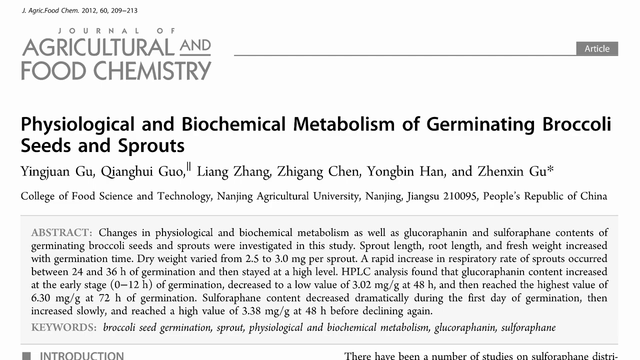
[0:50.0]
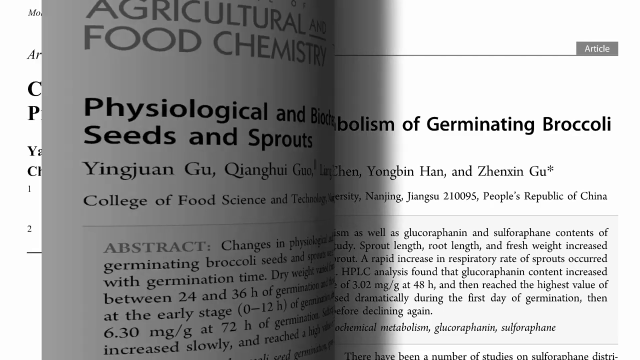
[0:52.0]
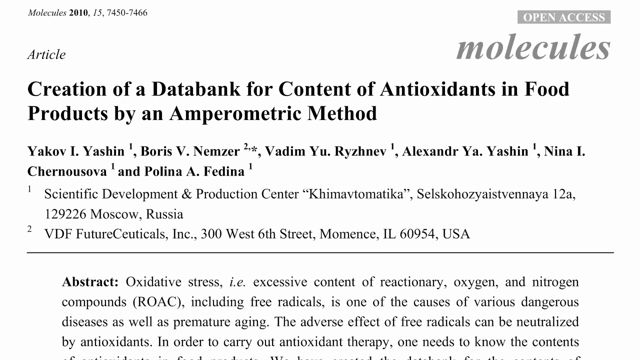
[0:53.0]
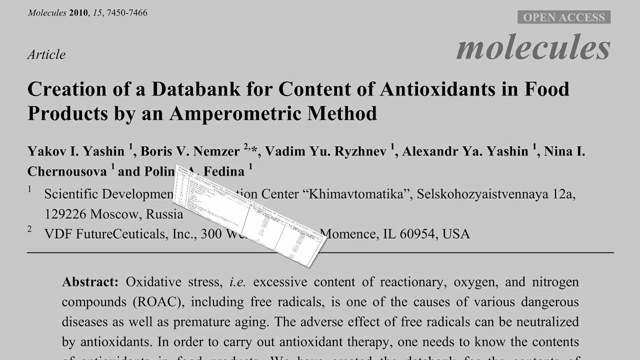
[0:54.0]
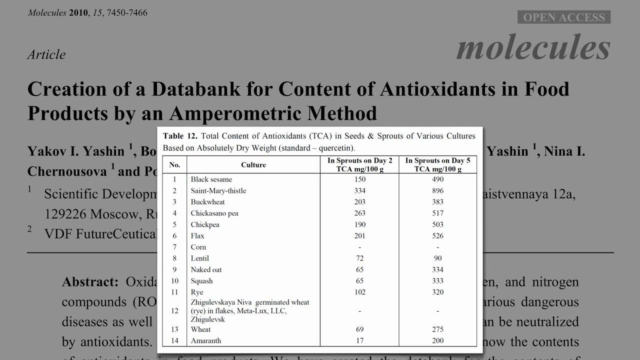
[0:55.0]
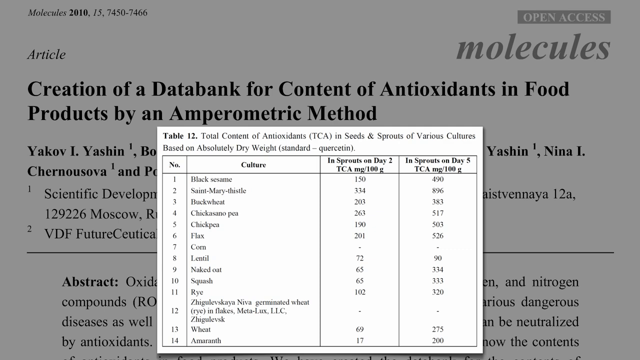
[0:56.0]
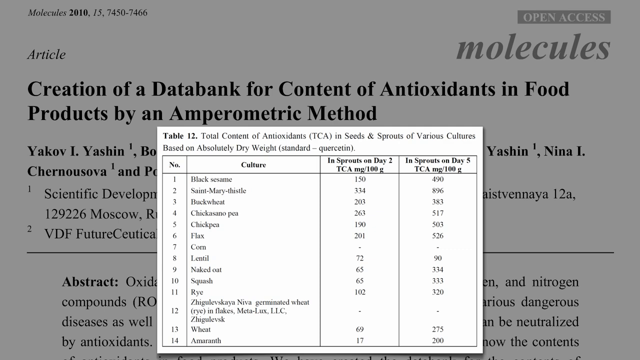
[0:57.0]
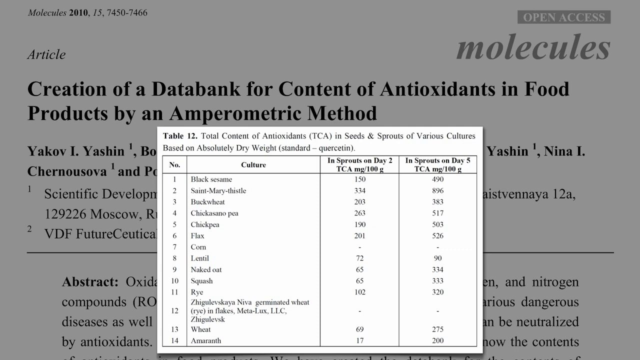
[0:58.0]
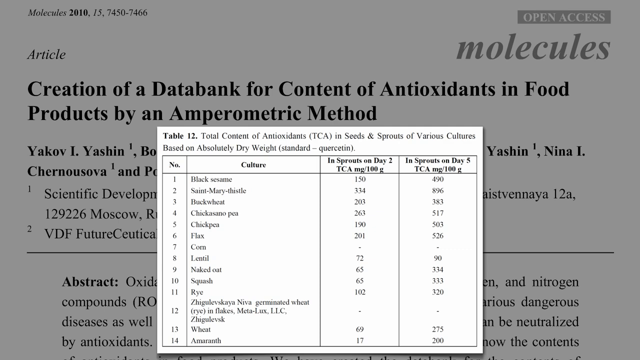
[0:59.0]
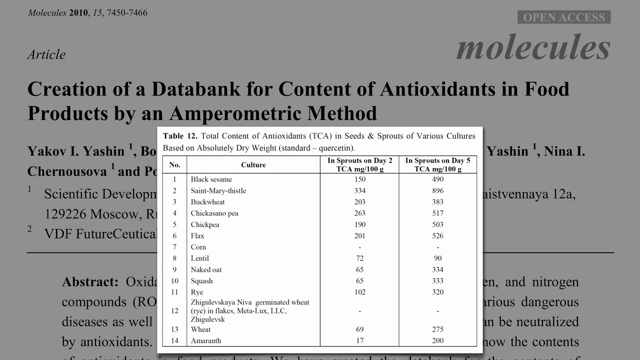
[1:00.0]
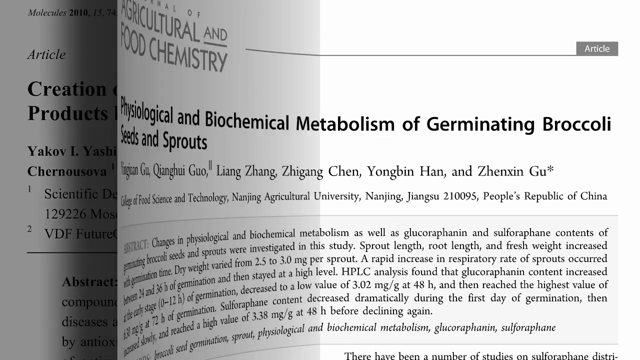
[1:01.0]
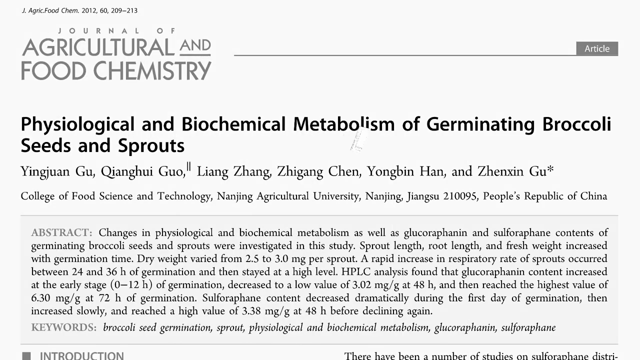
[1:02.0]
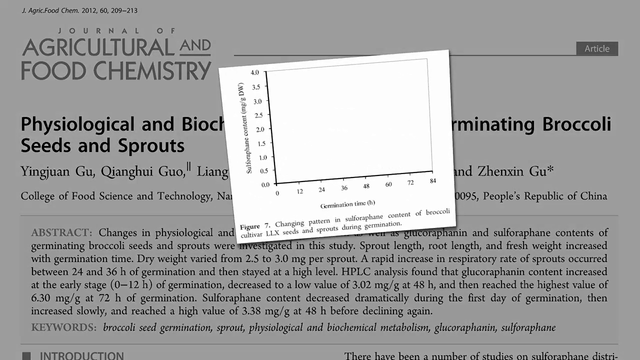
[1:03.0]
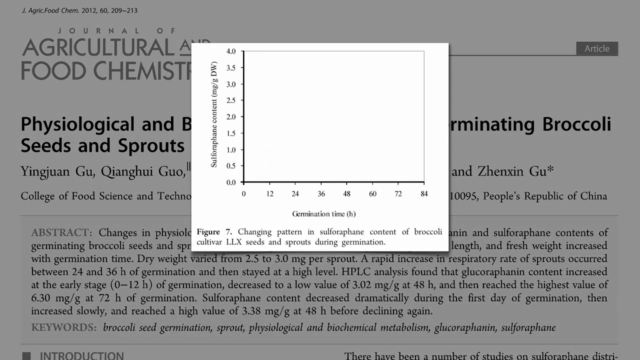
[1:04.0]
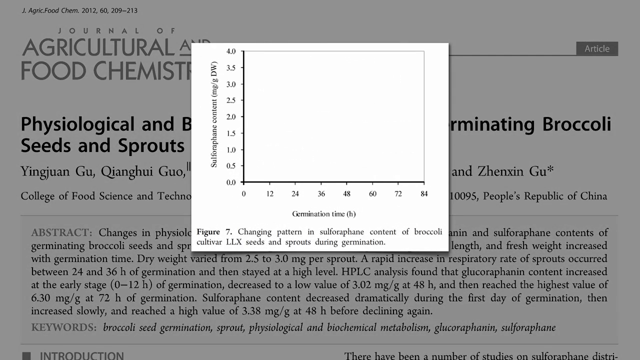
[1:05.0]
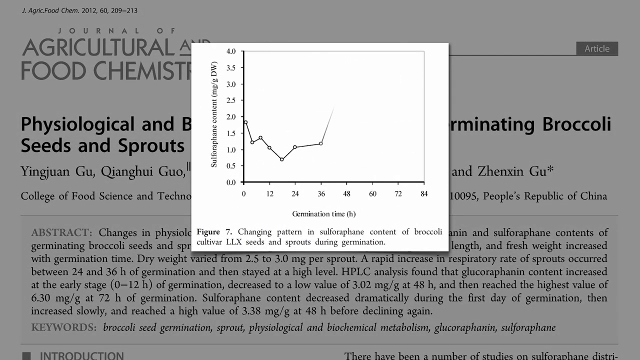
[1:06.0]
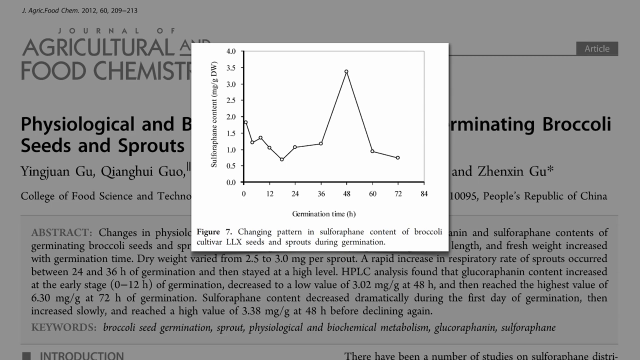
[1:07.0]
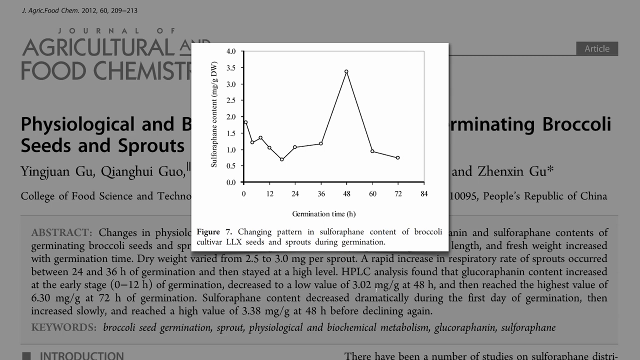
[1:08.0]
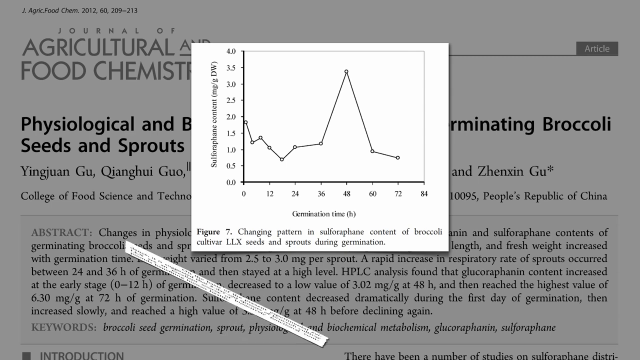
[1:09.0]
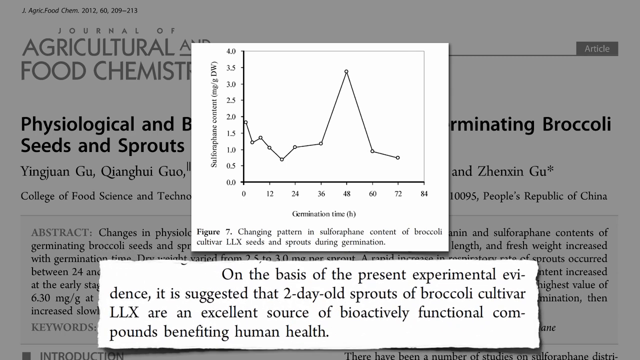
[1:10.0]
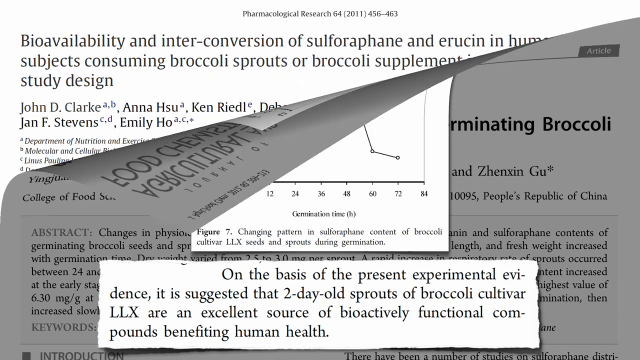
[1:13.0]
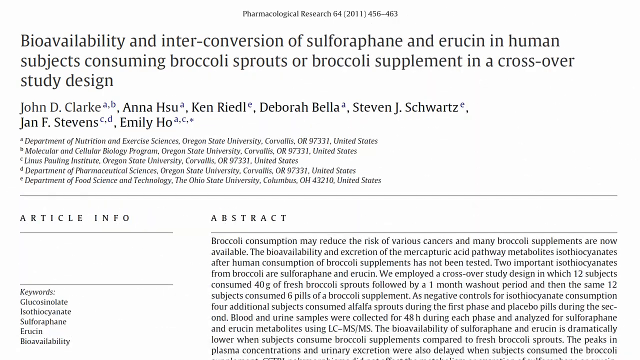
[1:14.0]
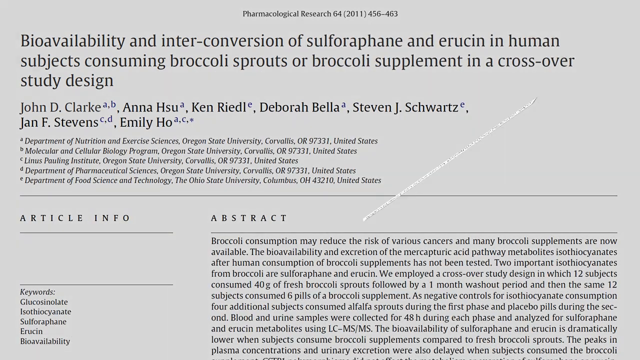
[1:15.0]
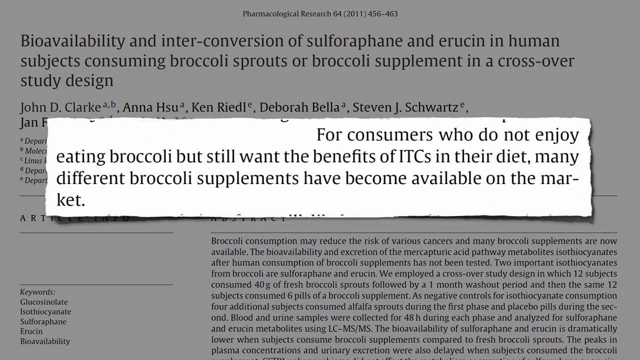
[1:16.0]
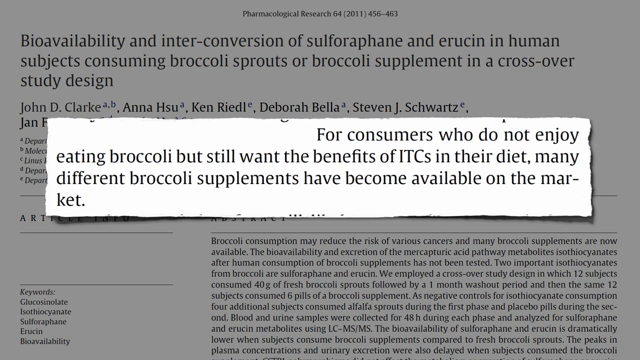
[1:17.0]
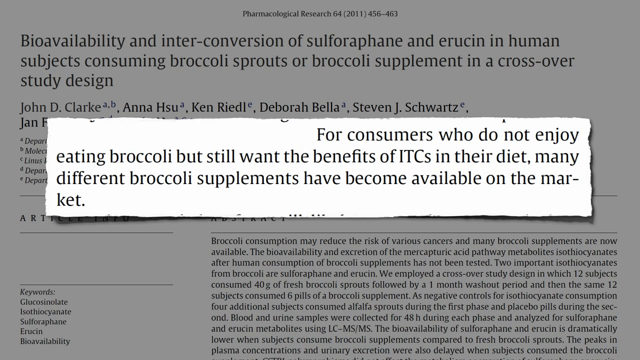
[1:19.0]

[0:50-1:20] More pages from the articles are shown, with specific parts highlighted in the middle of the video, and each page transitions with a smooth animation. A graph shows an upward and downward decline of so-called content. Underneath it, the text reads "on the basis of the present experimental evidence, it is suggested that two-day-old sprouts of broccoli cultivar LLX are an excellent source of bioactively functional compounds benefiting human health." The video then transitions to an article titled "Bioavailability and interconversion of sulforaphane and Erysine in human subjects consuming broccoli sprouts or broccoli supplement in a crossover study design." Most of the words are black, and the page backgrounds are solid white. The entire video is in a rectangular shape.